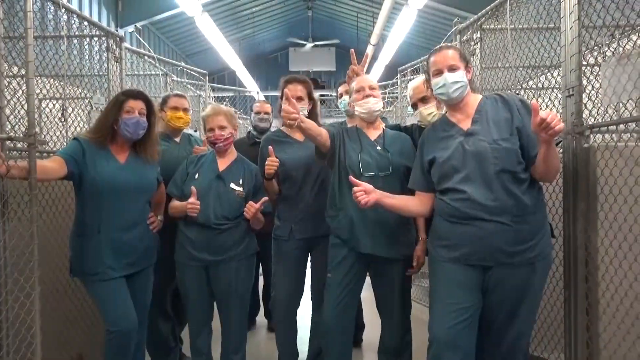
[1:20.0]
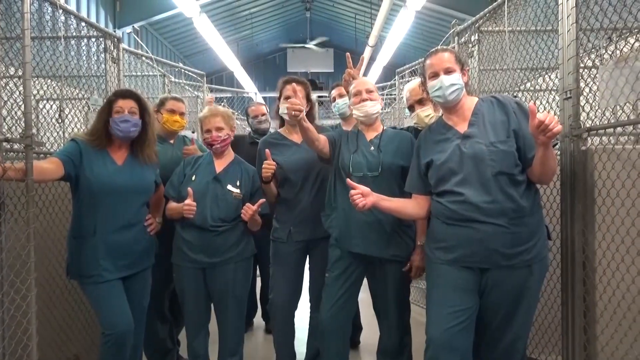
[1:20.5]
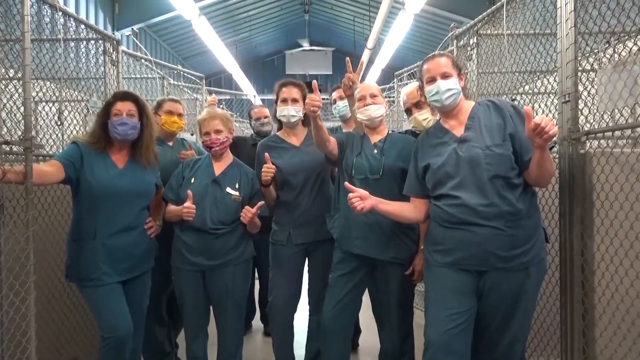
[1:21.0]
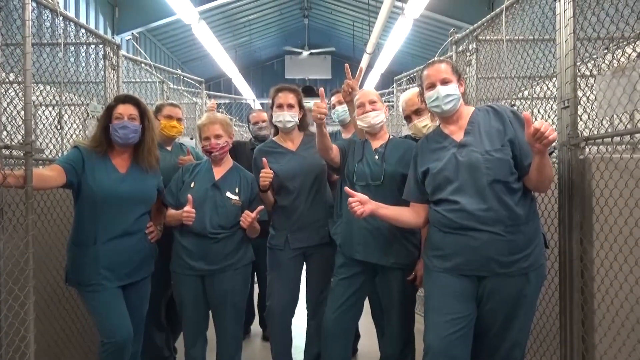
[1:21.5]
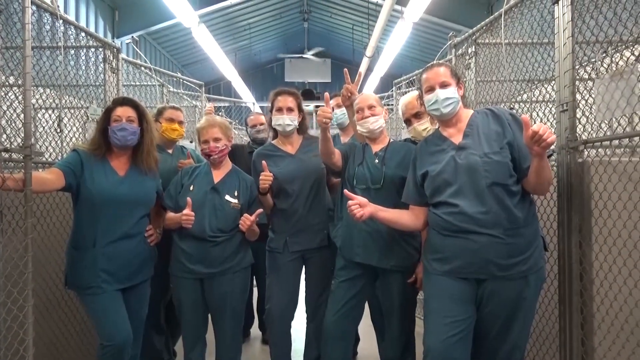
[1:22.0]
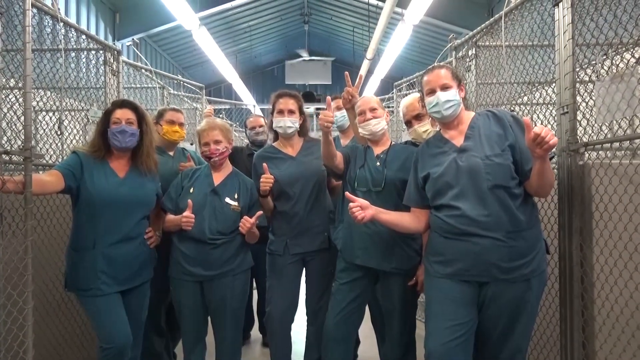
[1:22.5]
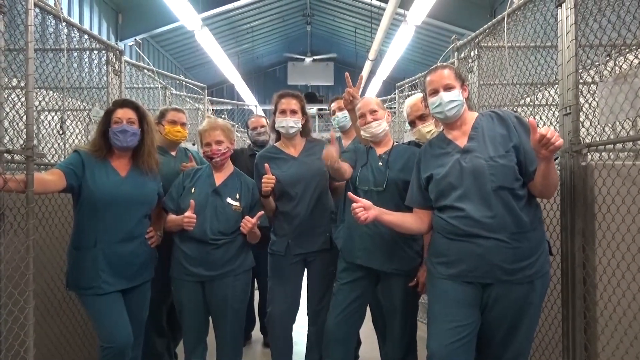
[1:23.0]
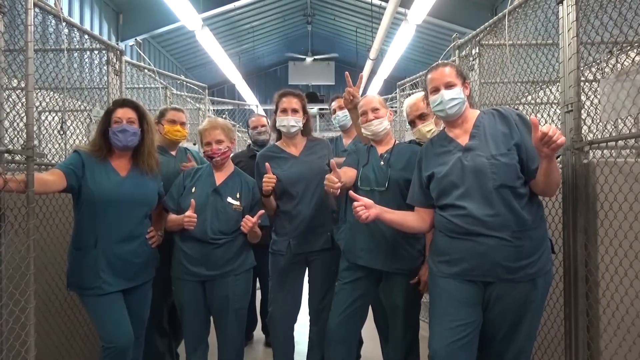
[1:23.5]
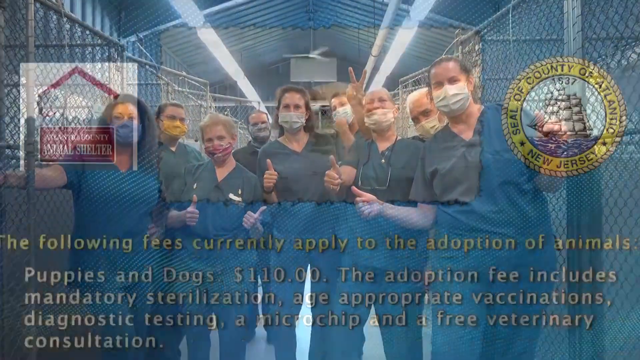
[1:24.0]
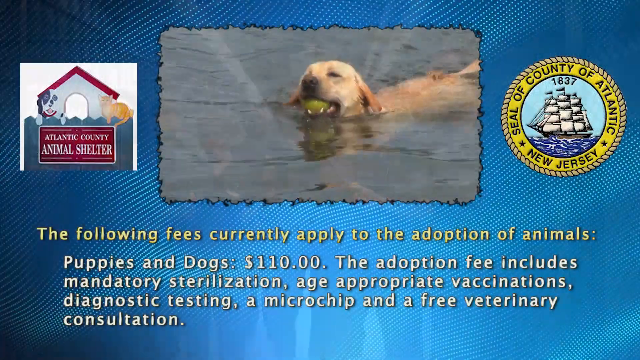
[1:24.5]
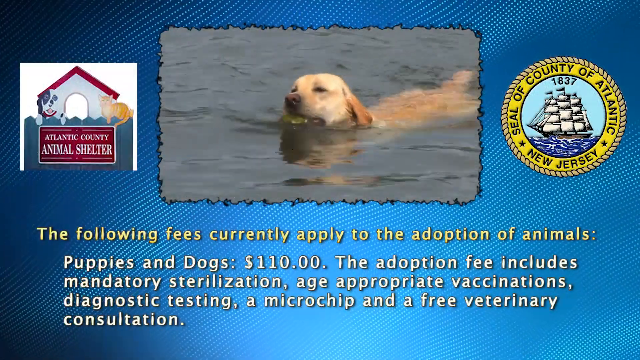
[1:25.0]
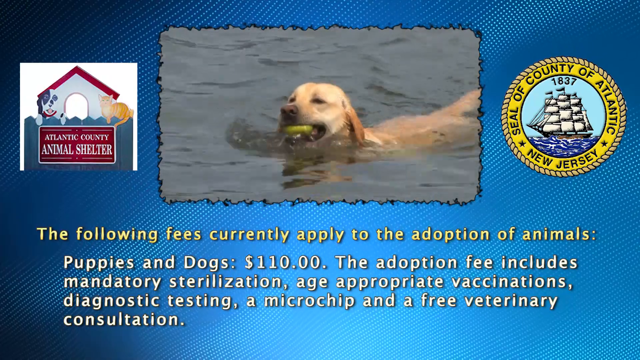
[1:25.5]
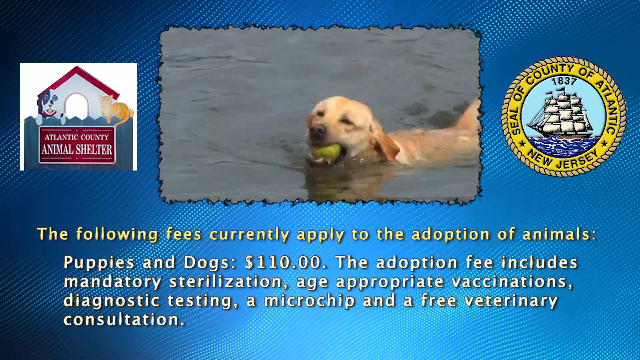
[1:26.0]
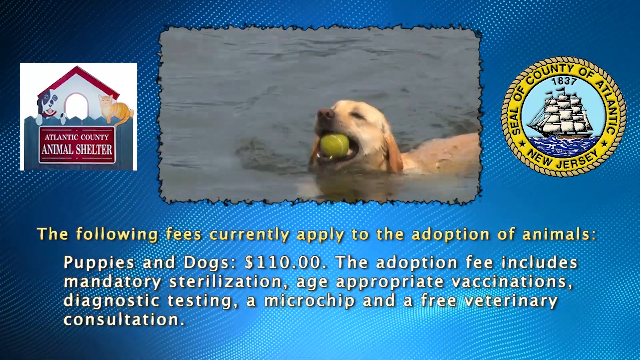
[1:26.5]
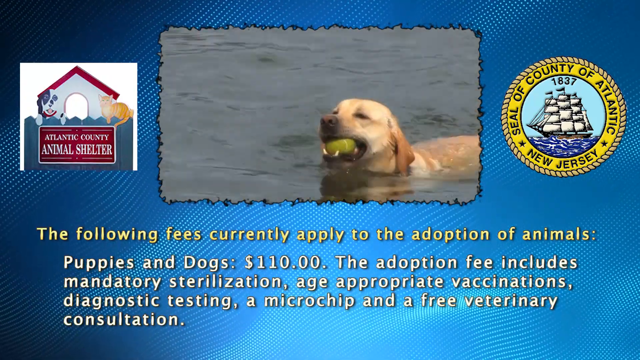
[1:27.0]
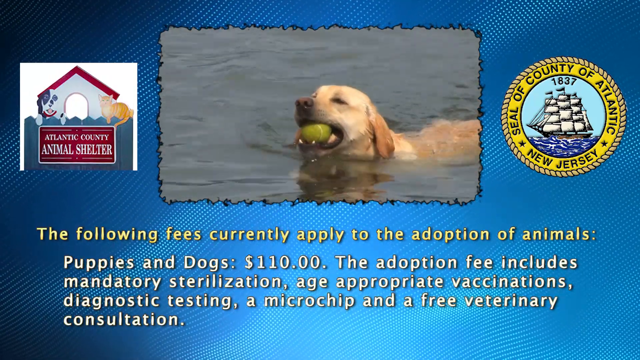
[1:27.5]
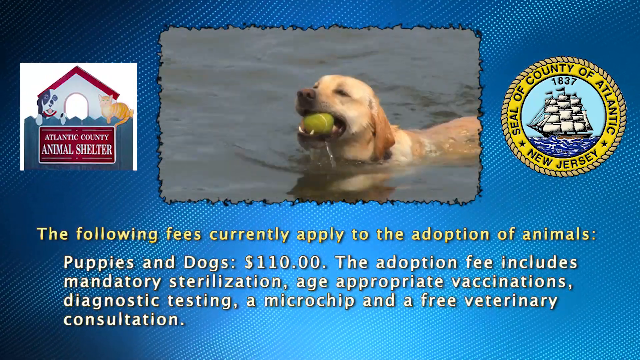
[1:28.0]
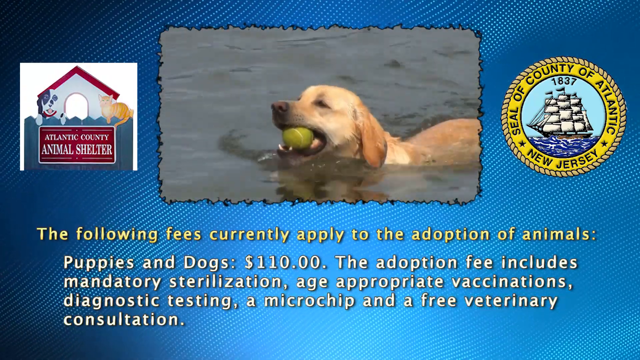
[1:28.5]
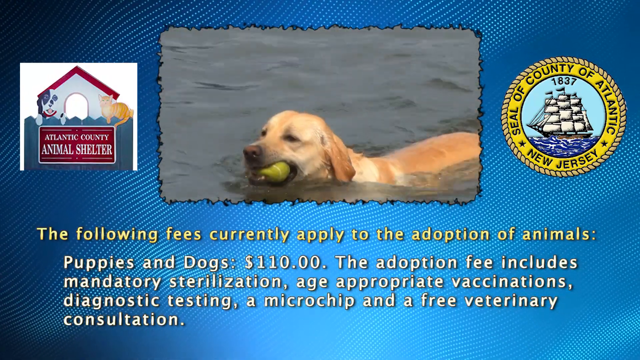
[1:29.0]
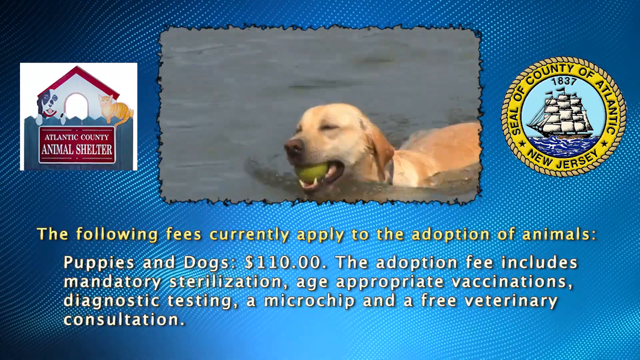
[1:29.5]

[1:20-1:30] Animal shelter staff stand in an empty kennel, all wearing masks, most of them giving a thumbs-up sign. The video transitions to an outro end screen. On the left is the logo of the Atlantic County Animal Shelter, and on the far right is the seal of Atlantic County, New Jersey, 1837. Between the two logos is a video of a yellow Labrador swimming in water with a tennis ball in its mouth. Underneath the dog video is written "the following fees currently apply to the adoption of animals. Puppies and dogs, $110. The adoption fee includes mandatory sterilization, age-appropriate vaccinations, diagnostic testing, a microchip, and a free veterinary consultation."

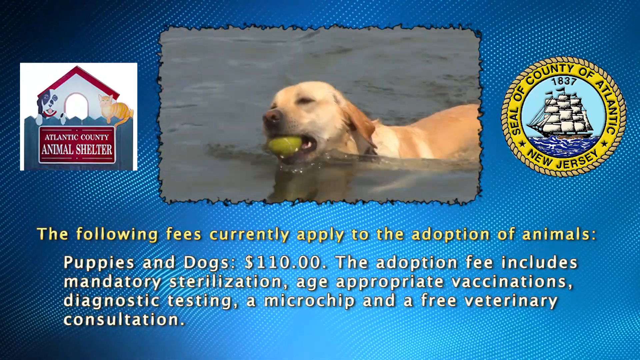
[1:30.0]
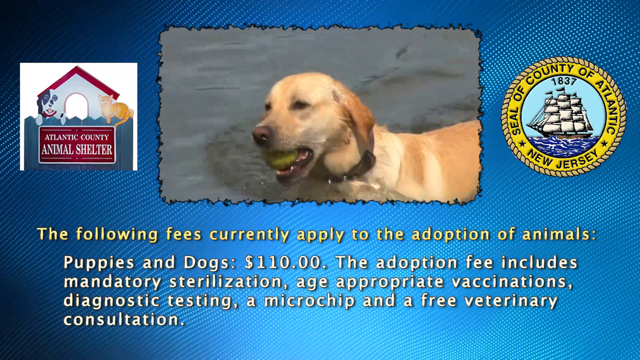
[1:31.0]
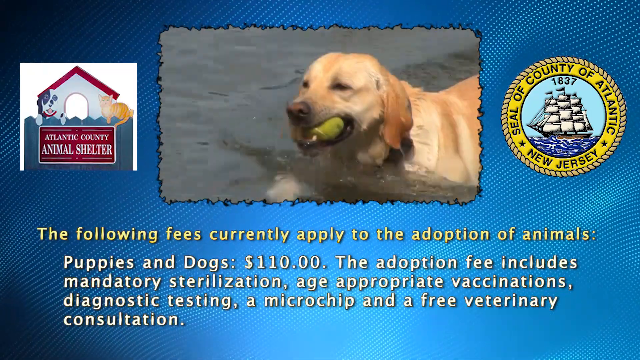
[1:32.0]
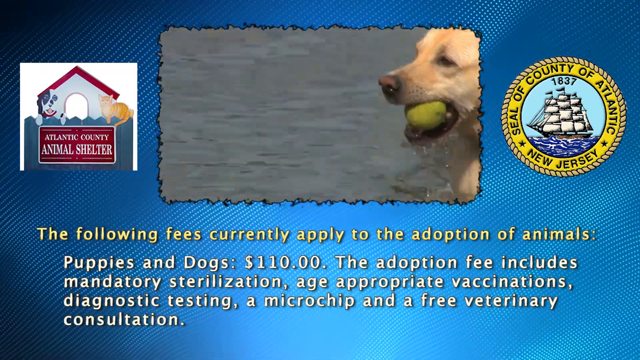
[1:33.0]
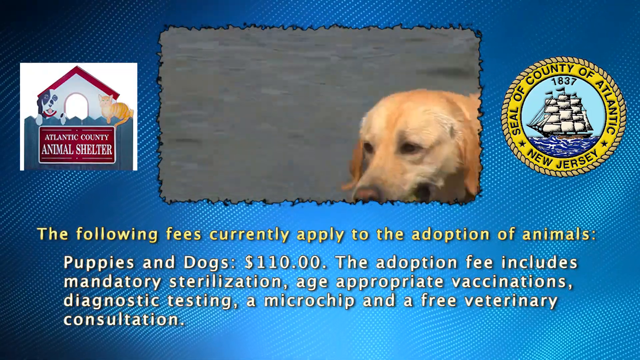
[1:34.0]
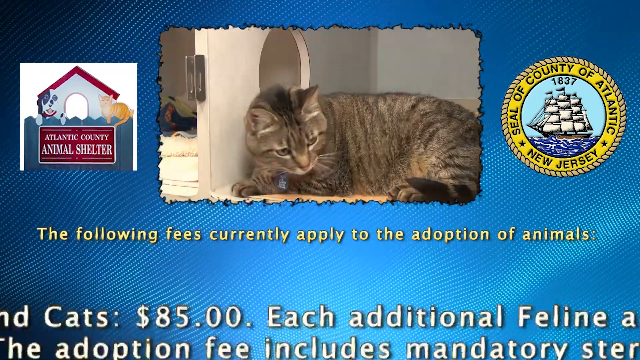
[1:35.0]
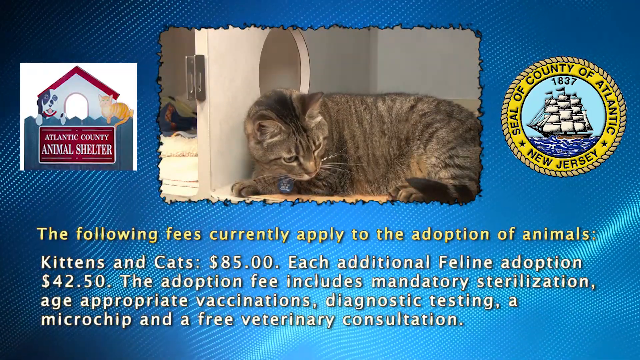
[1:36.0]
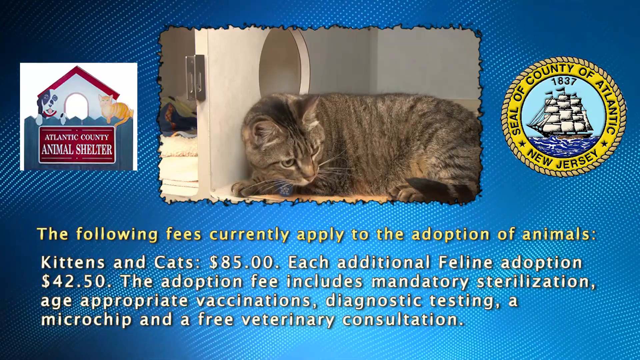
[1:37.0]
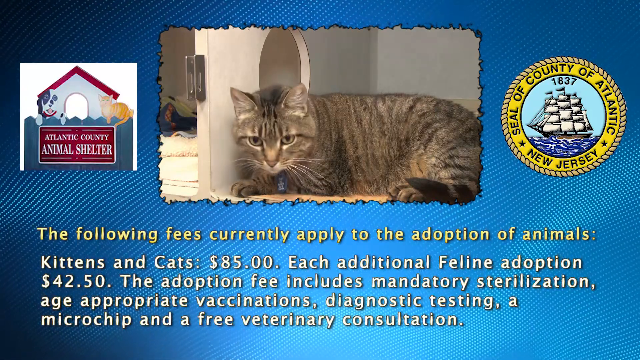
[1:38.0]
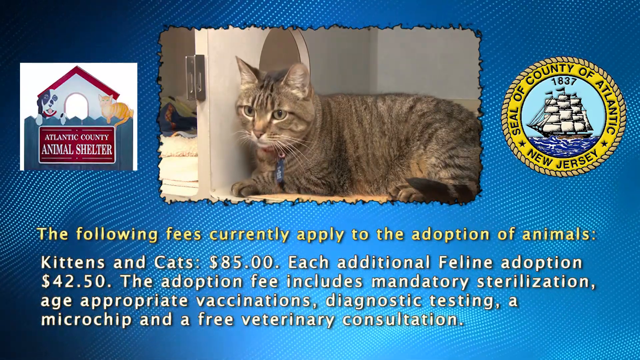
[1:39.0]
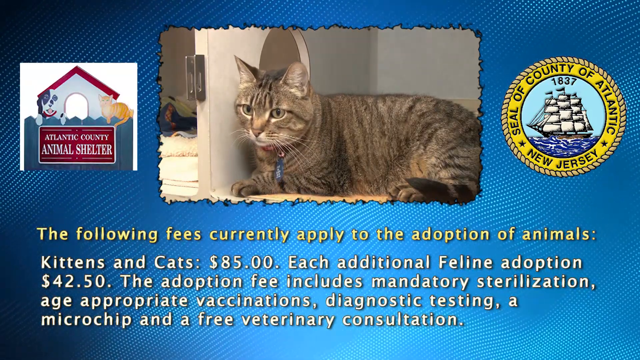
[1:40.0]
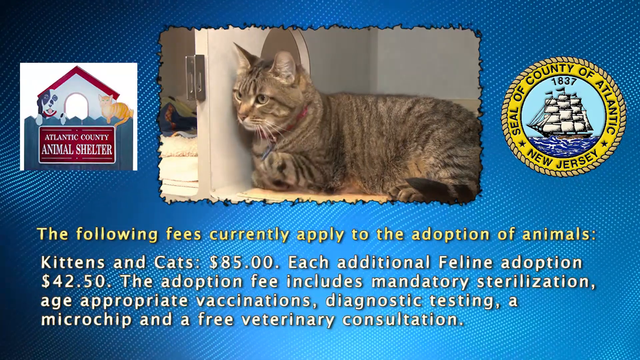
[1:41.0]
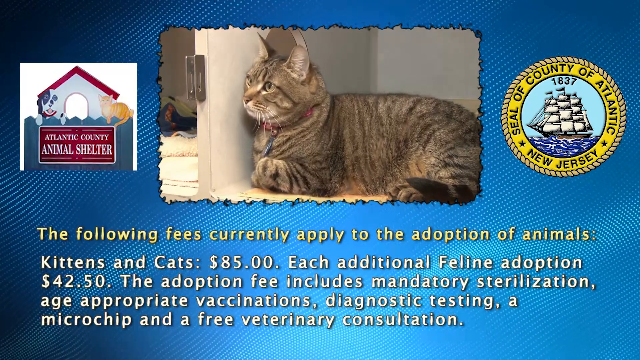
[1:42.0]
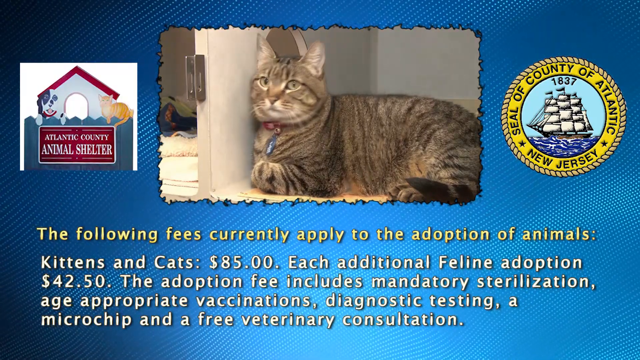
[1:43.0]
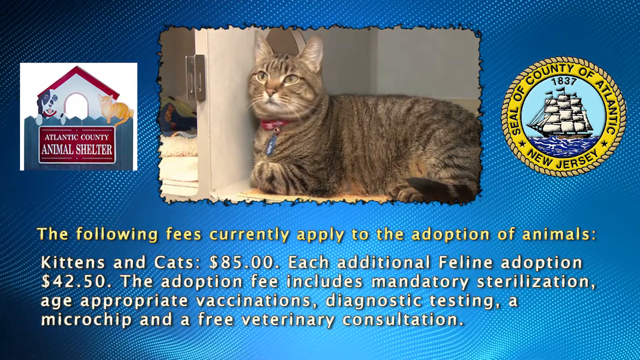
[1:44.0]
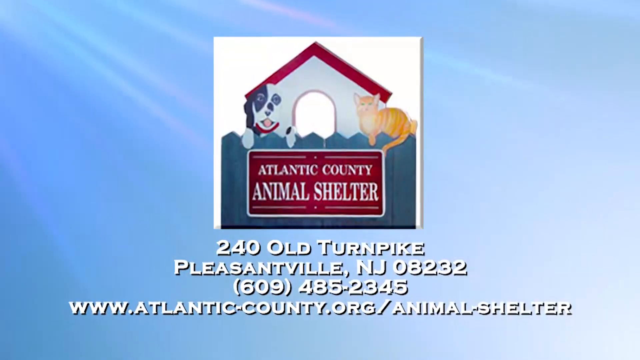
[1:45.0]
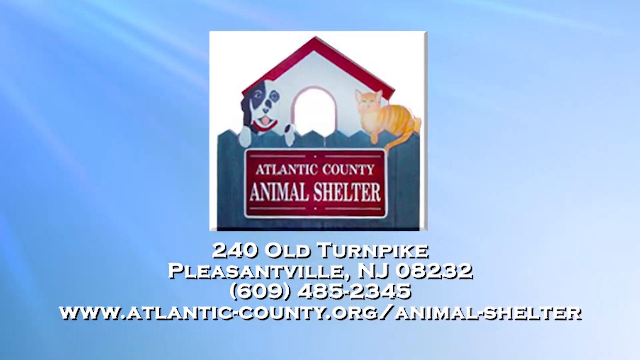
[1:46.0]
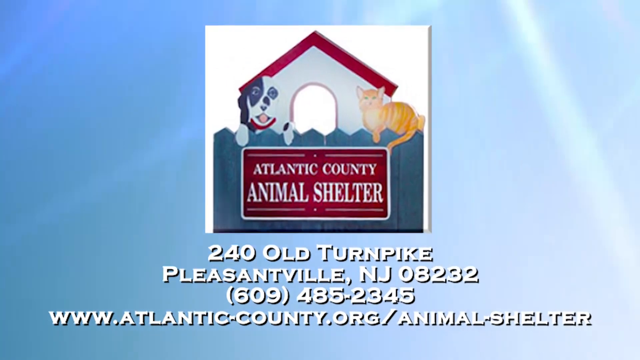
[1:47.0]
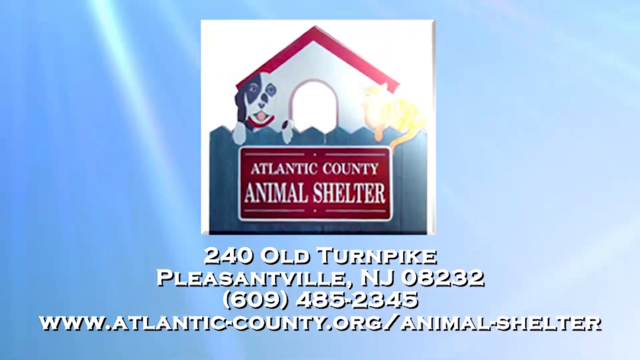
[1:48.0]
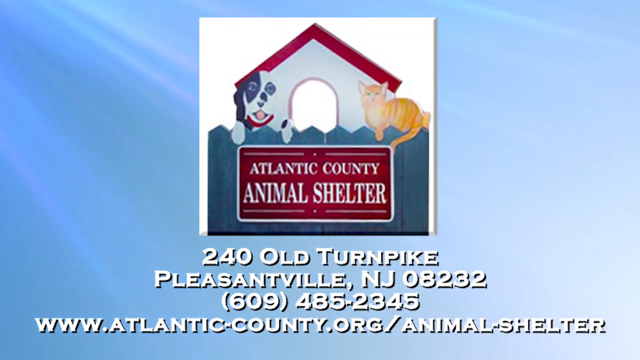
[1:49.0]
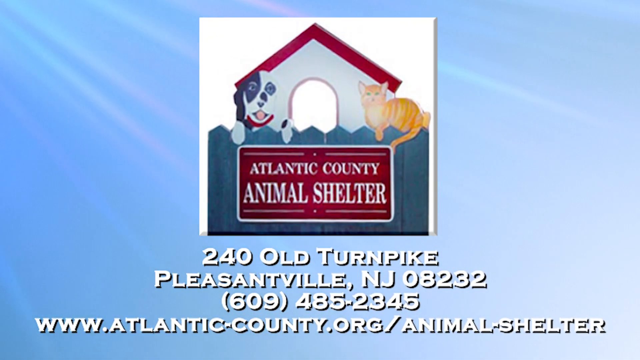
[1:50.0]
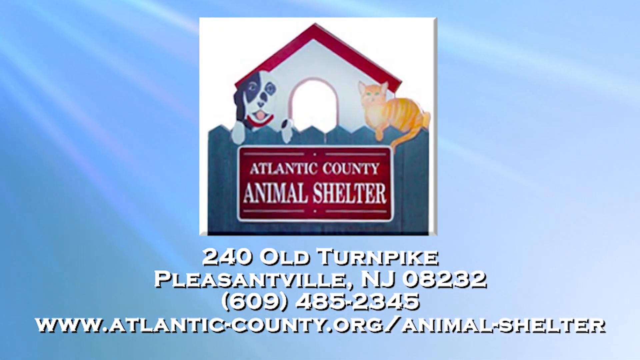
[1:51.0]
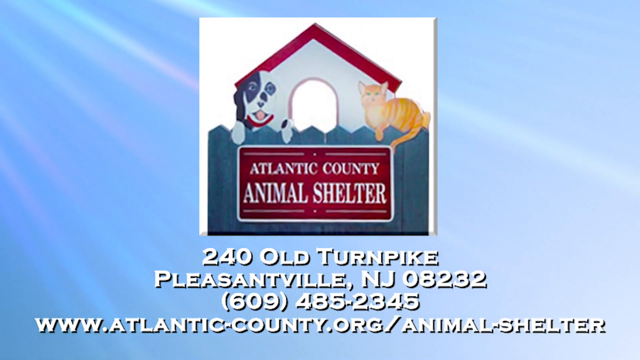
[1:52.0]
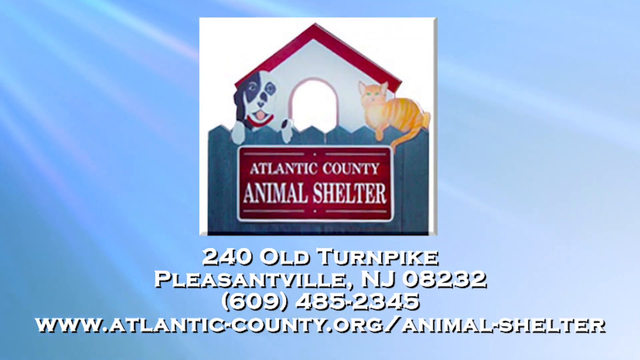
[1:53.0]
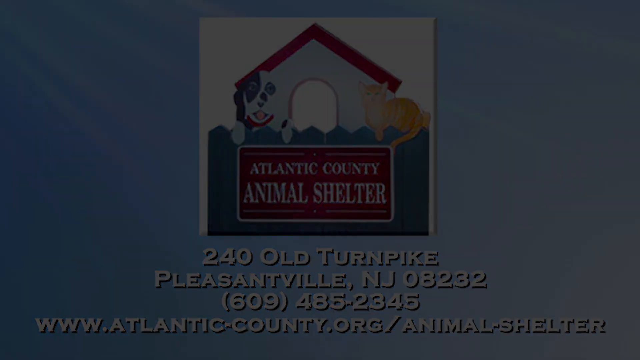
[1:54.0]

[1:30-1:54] The outro end screen shows the Atlantic County Animal Shelter logo on the left and the seal of Atlantic County, New Jersey on the far right. In the center is a video of a yellow Labrador swimming in water with a tennis ball in its mouth. Under the video is written "the following fees currently applied to the adoption of animals. Puppies and dogs, $110. The adoption fee includes mandatory sterilization, age-appropriate vaccinations, diagnostic testing, a microchip, and a free veterinary consultation." The swimming dog changes to a cat sitting inside a kennel, and the adoption rates change to "Kittens and cats $85, each additional feline adoption $42.50." The video ends with the Atlantic County Animal Shelter logo, a dog house behind a fence, with the dog looking over the fence and the cat sitting on top of the fence.